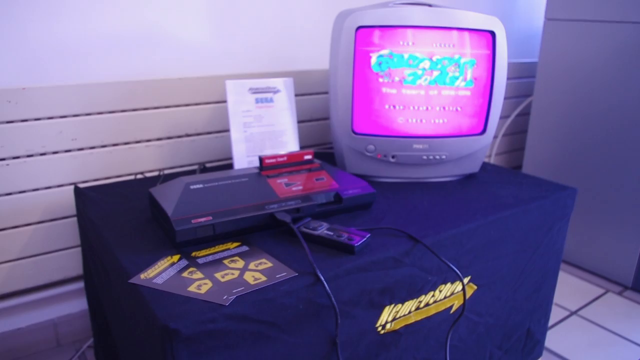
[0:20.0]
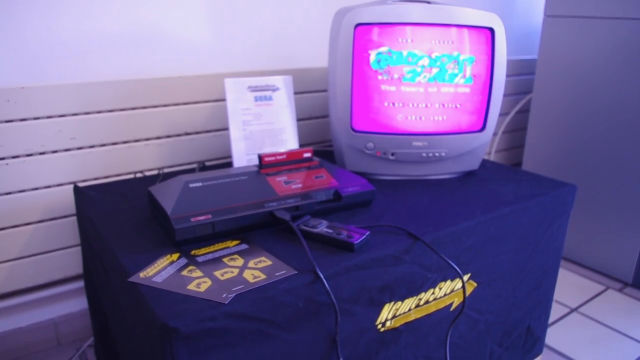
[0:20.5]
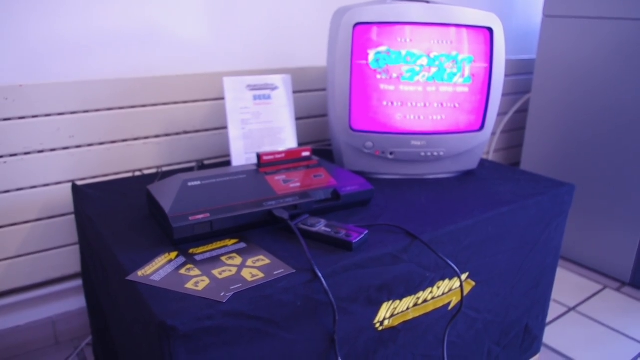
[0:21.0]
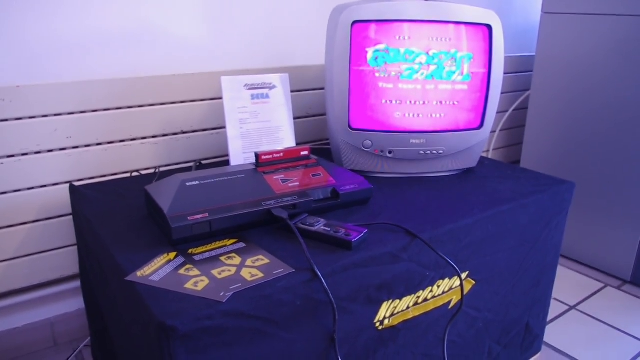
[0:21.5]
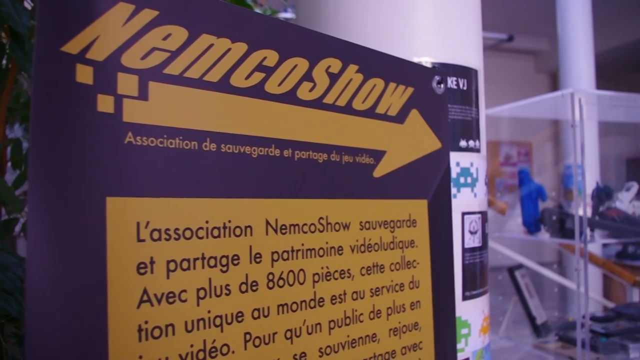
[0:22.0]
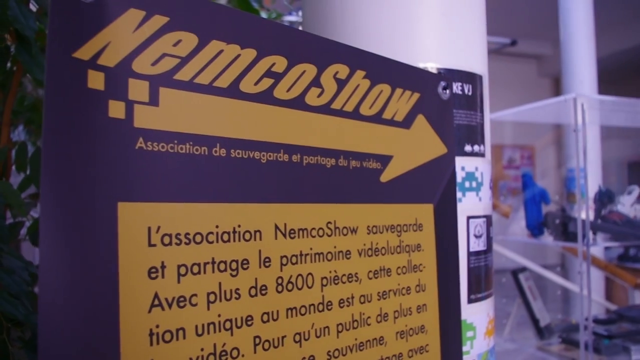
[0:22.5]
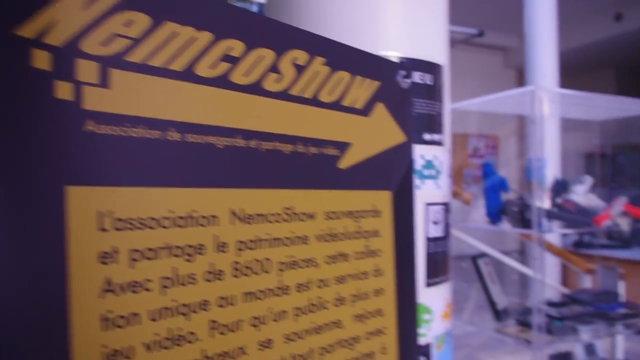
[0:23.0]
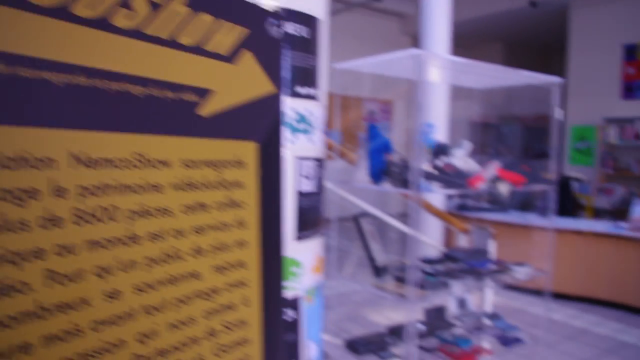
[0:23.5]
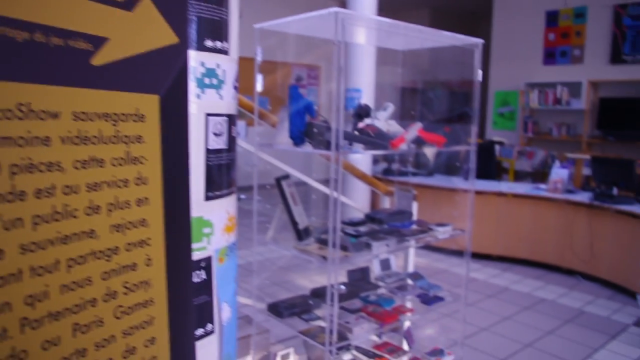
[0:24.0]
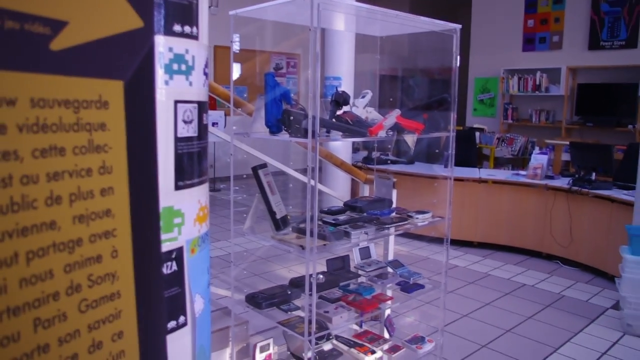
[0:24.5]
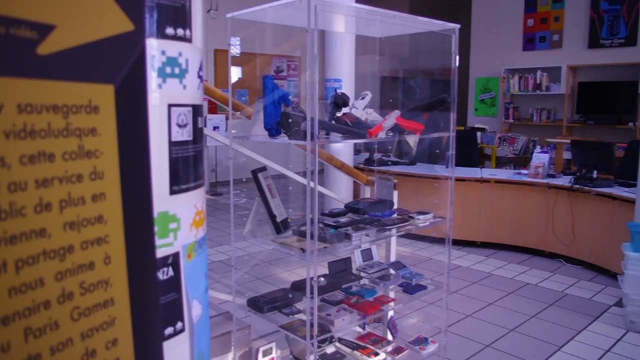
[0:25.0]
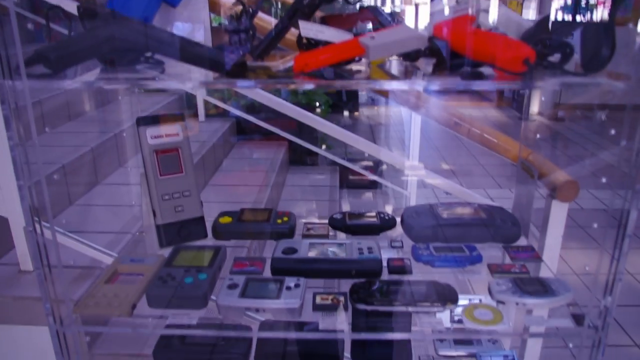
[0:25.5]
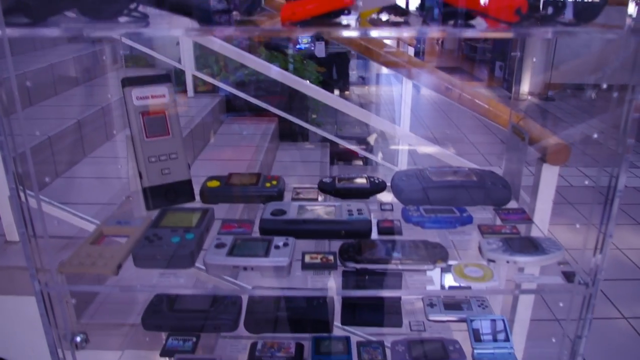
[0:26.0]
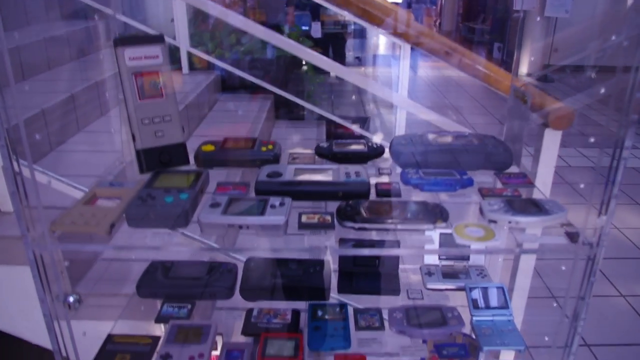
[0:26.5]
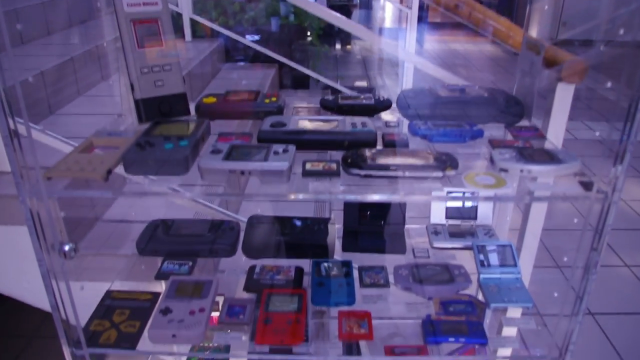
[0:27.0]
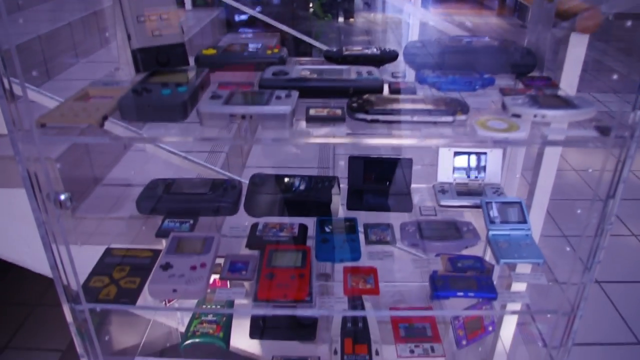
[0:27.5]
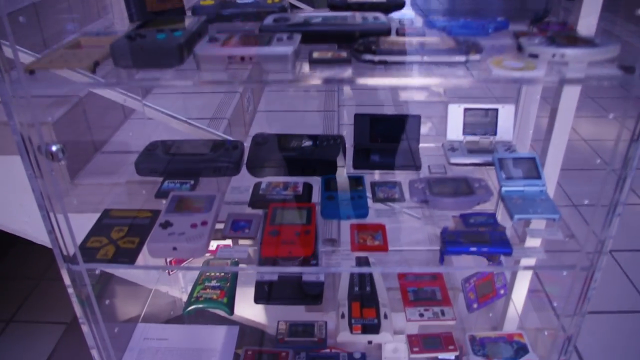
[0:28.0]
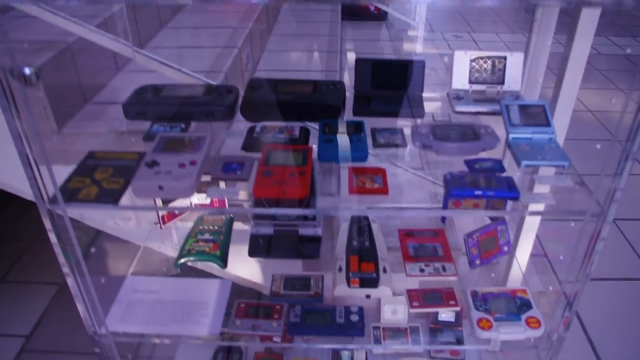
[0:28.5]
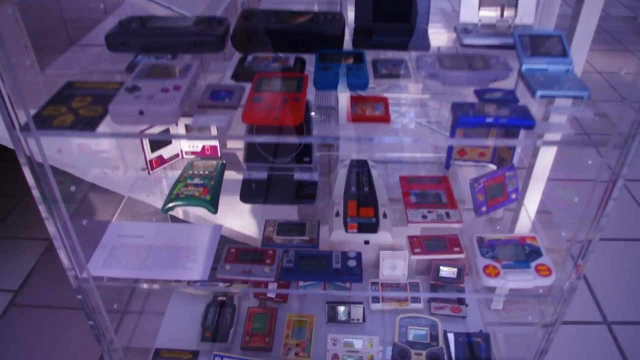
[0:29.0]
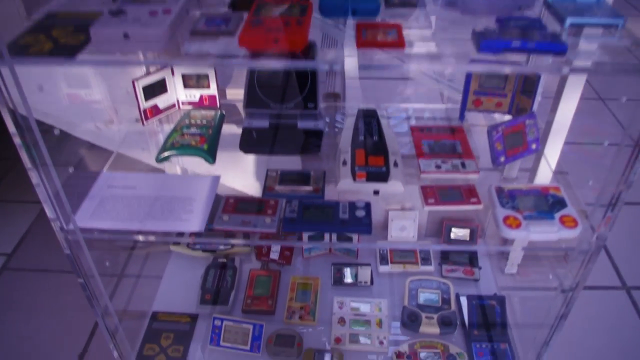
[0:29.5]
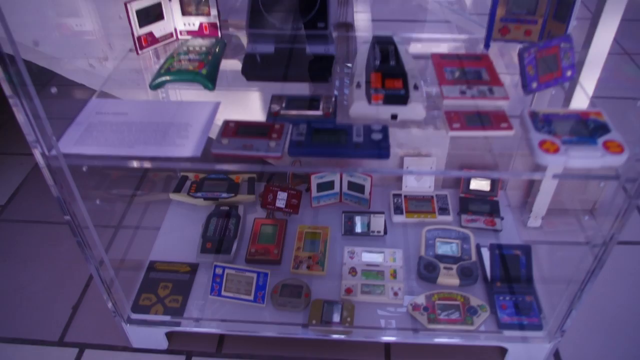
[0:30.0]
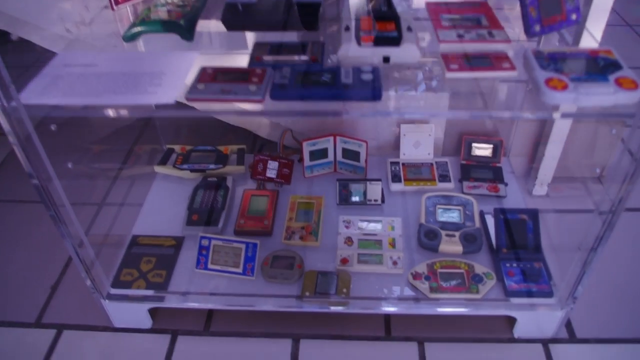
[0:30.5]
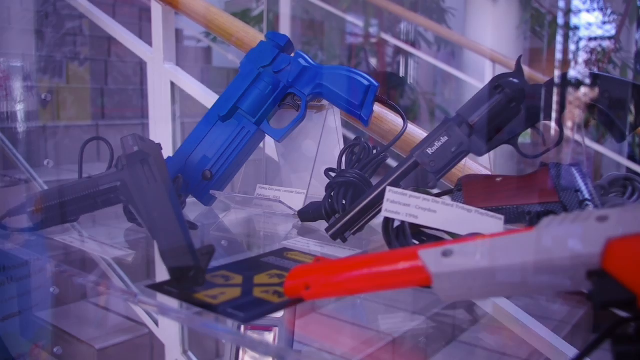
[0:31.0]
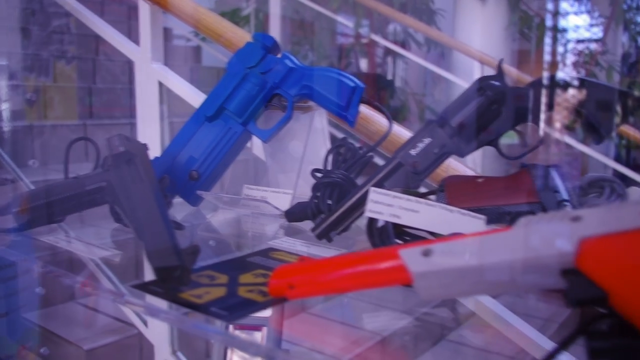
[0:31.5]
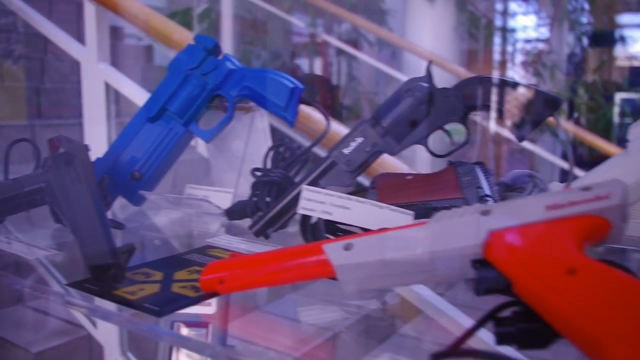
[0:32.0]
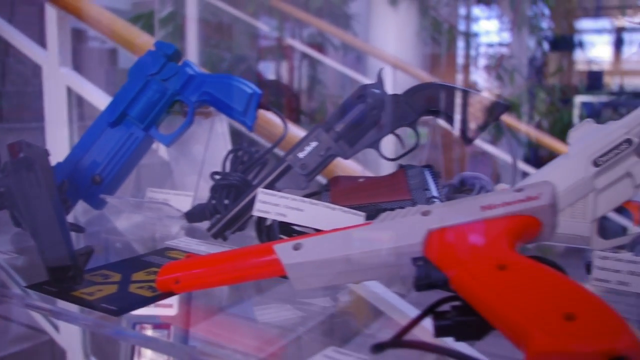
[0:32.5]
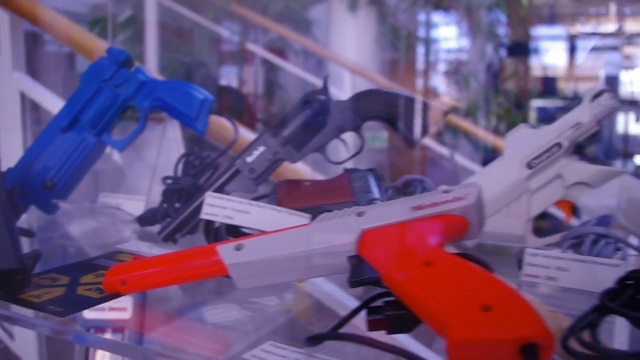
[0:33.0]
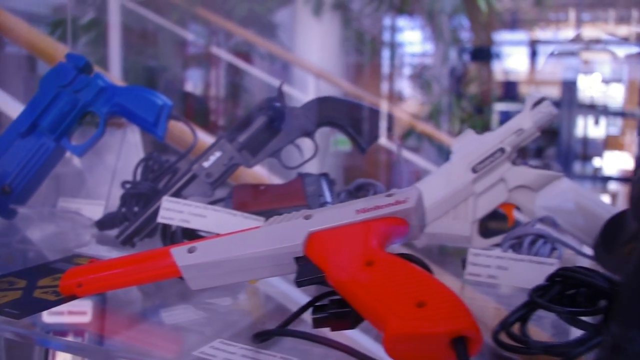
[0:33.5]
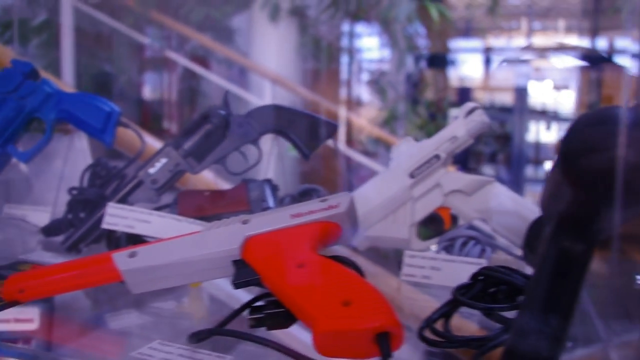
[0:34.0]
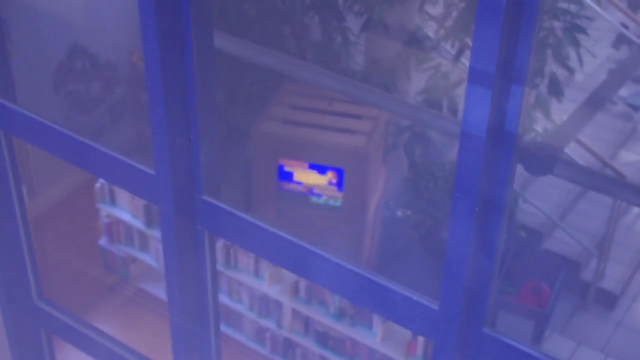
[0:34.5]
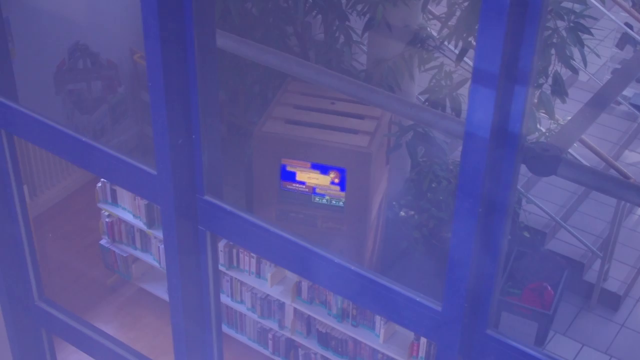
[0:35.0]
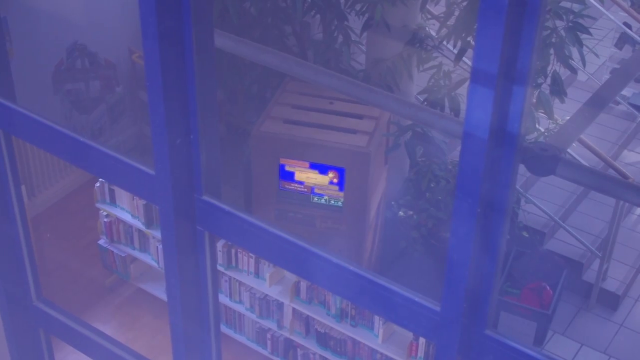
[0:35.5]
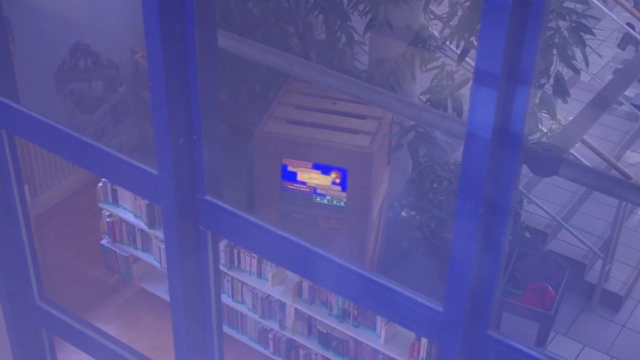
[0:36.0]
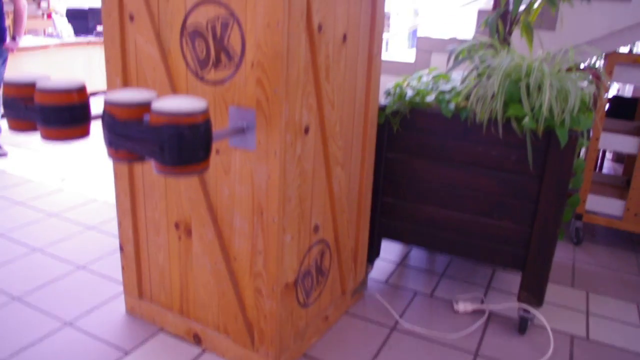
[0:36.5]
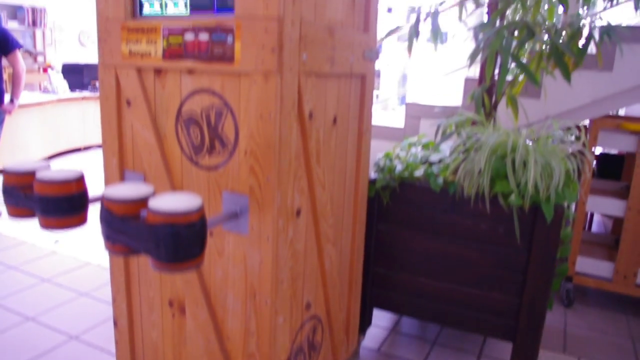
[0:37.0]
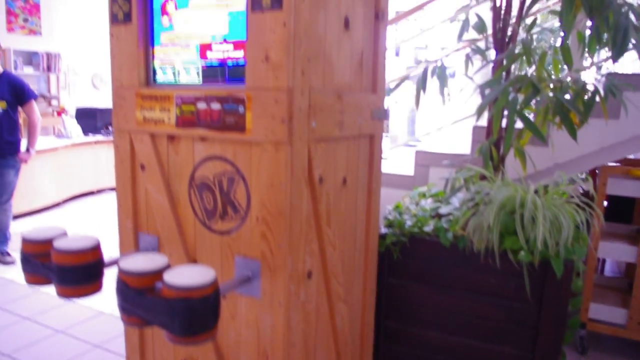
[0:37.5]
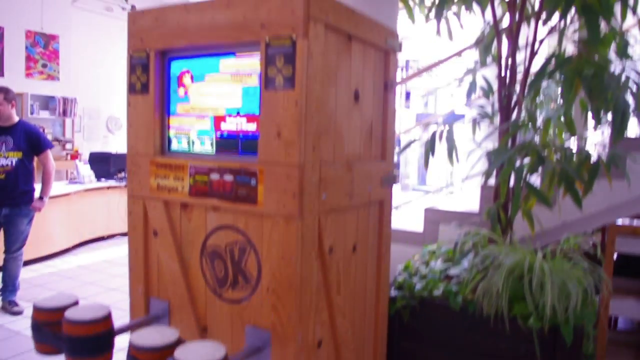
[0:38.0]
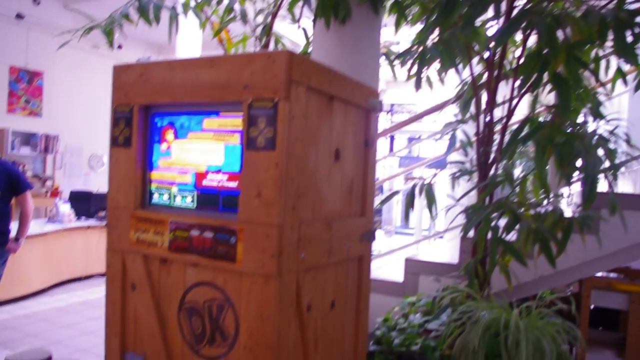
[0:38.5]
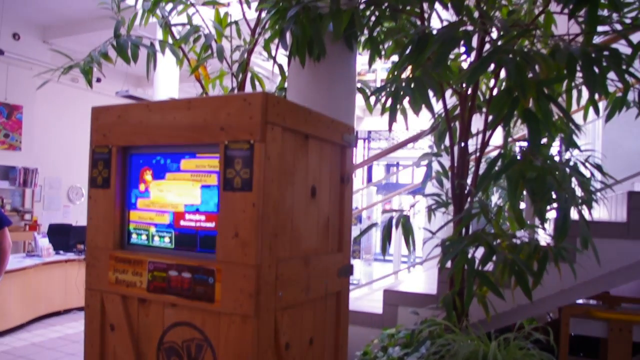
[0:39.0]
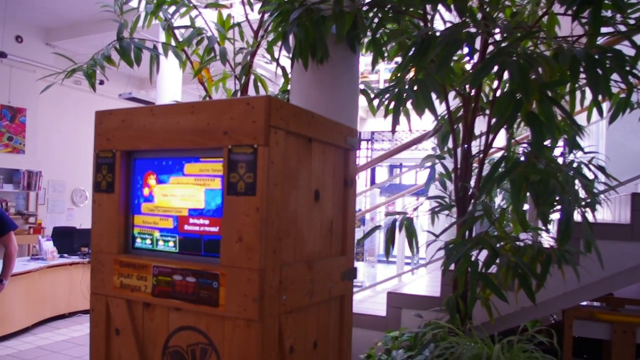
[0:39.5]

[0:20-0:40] Inside what looks like a video game museum filled with video game history and memorabilia, there are many posters and game consoles. The consoles appear to be functional: they are plugged into monitors, and the monitors display a title card for a game. The camera pans over many different kinds of consoles, including a Nintendo 64, and then over video game accessories inside what looks like a glass case. In the case are a Nintendo Zapper, Nintendo handheld consoles such as Game Boys, some Sega-adjacent or Sega-manufactured consoles, and many other unidentified handhelds. After panning across the case, the camera heads over to what looks like a large collection of light guns, the kind used to shoot at the screen in video games.